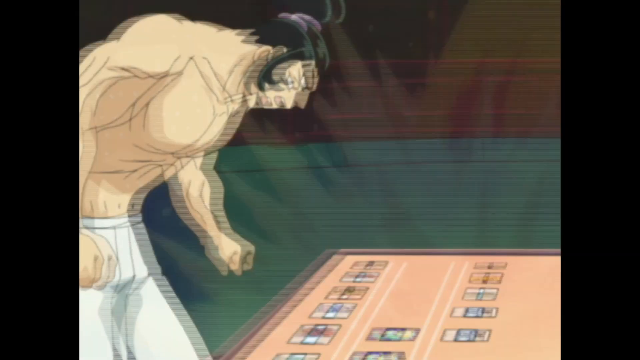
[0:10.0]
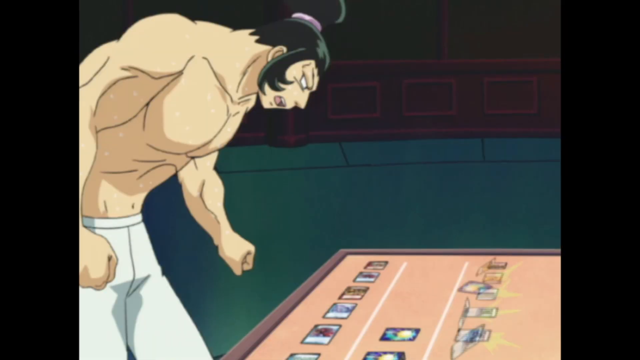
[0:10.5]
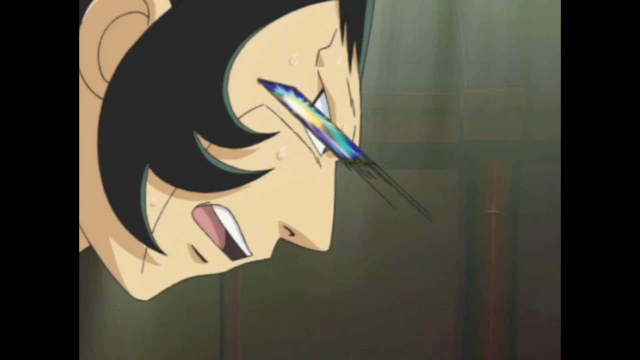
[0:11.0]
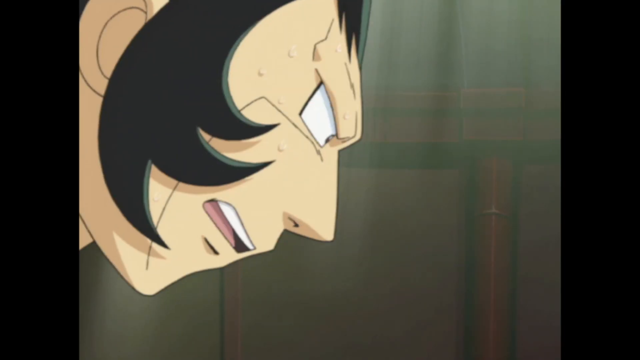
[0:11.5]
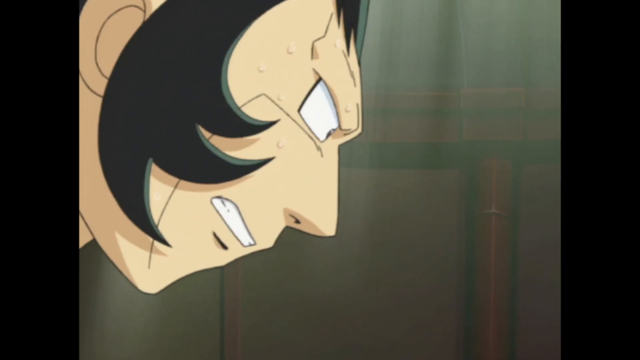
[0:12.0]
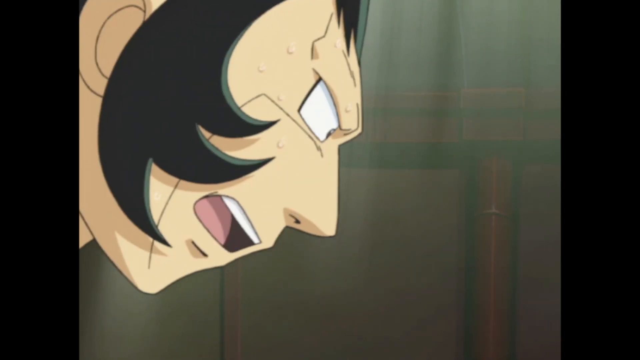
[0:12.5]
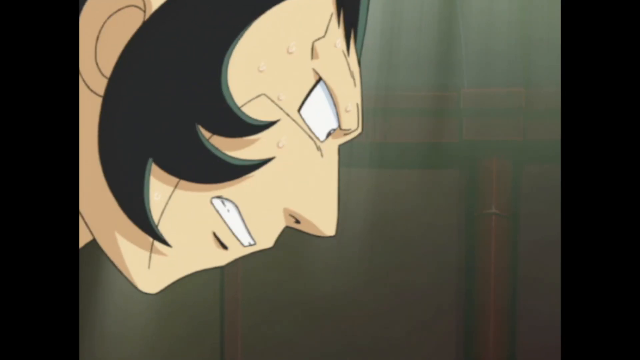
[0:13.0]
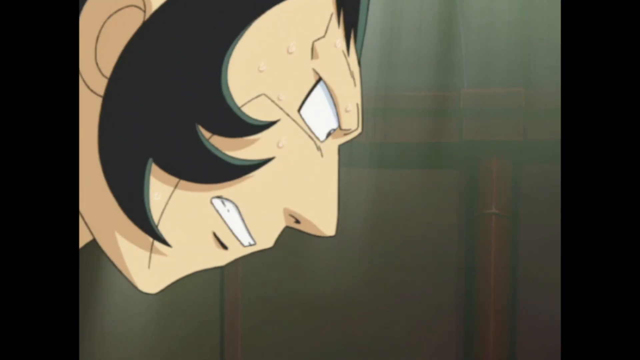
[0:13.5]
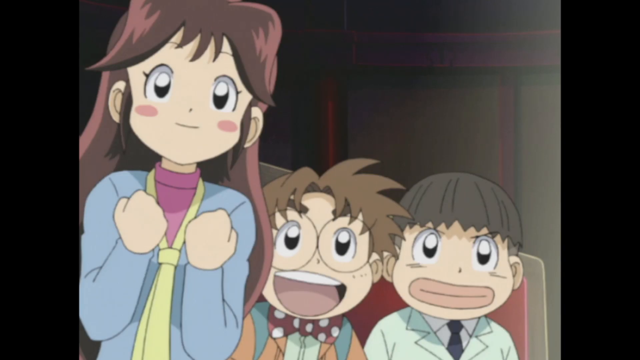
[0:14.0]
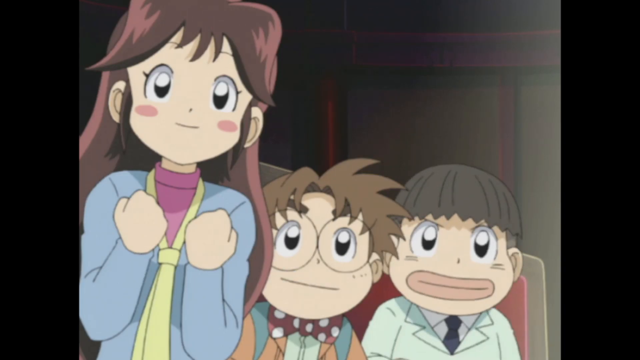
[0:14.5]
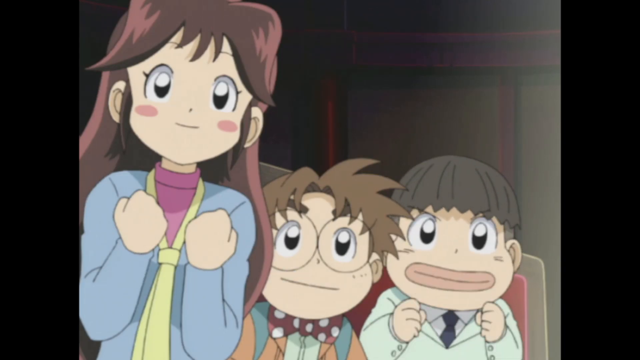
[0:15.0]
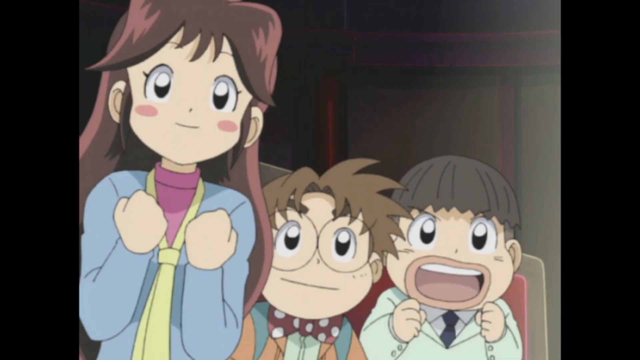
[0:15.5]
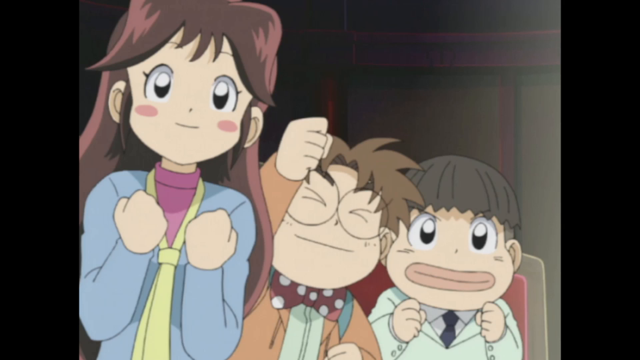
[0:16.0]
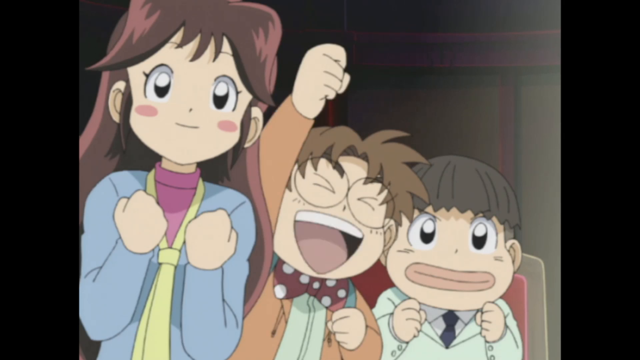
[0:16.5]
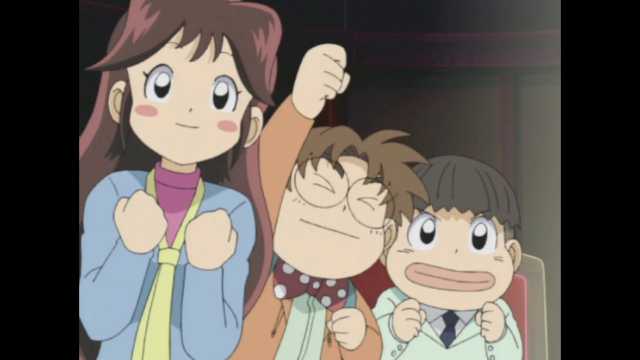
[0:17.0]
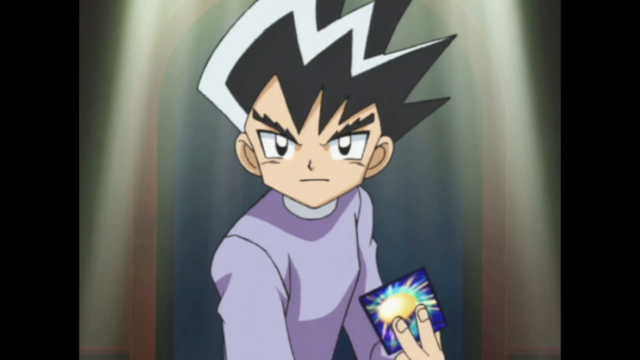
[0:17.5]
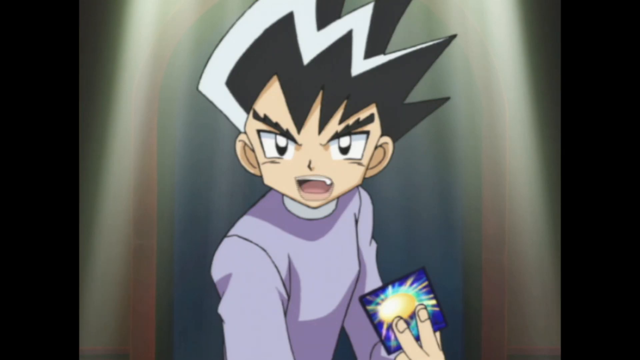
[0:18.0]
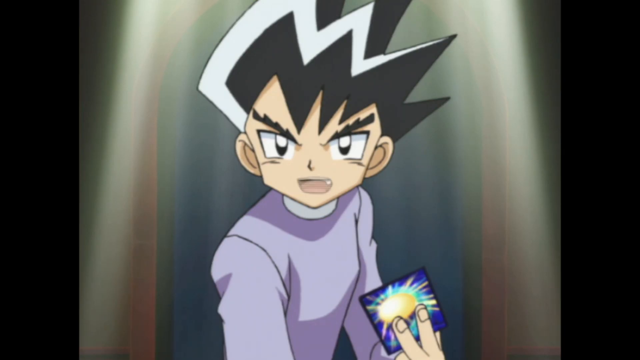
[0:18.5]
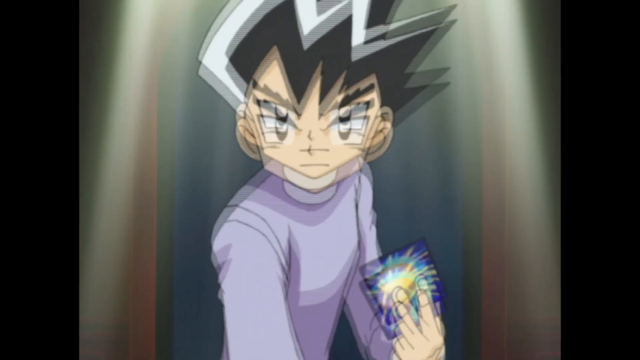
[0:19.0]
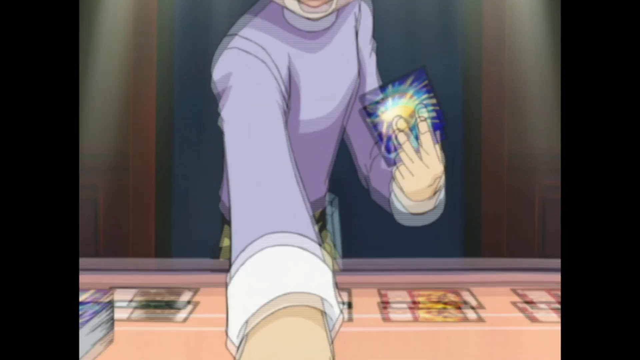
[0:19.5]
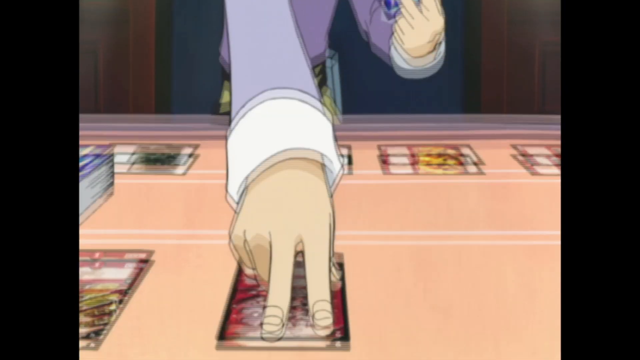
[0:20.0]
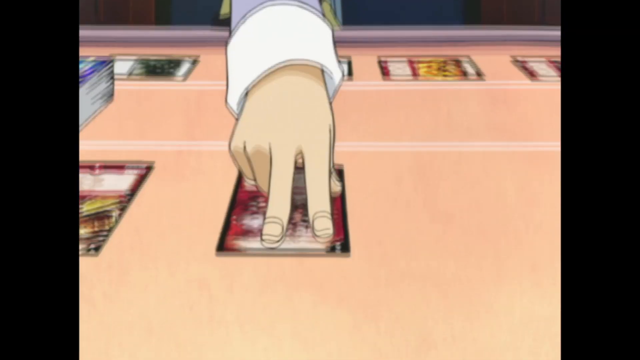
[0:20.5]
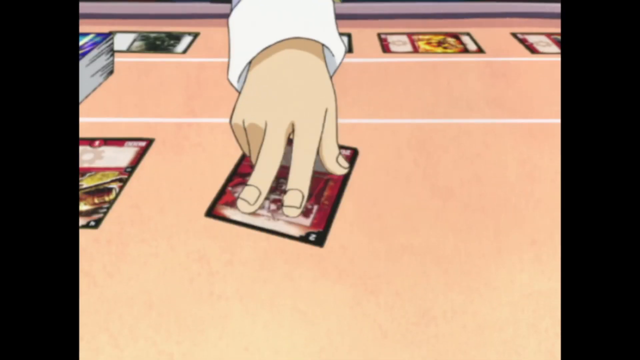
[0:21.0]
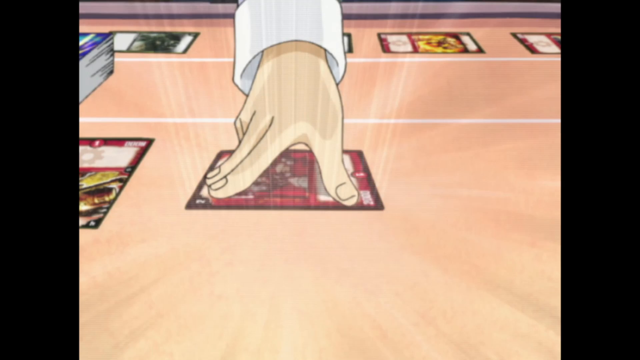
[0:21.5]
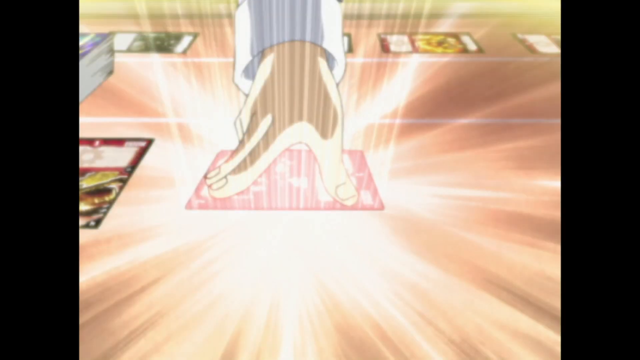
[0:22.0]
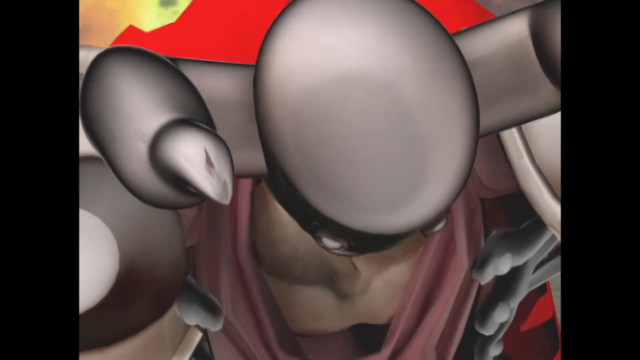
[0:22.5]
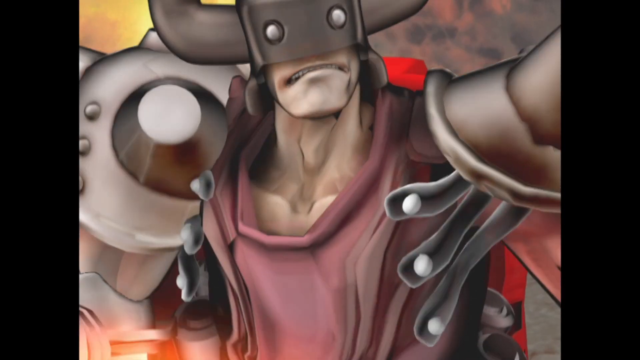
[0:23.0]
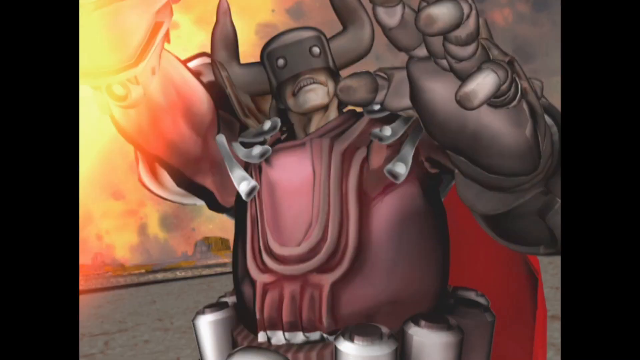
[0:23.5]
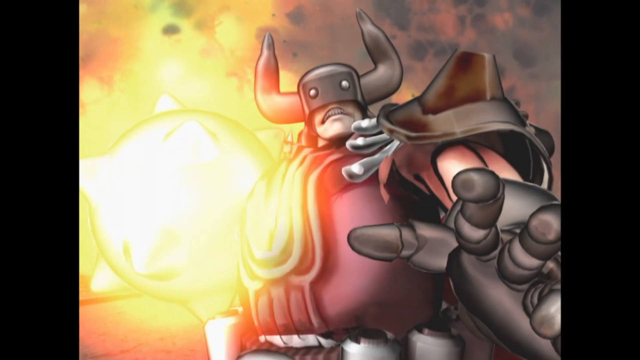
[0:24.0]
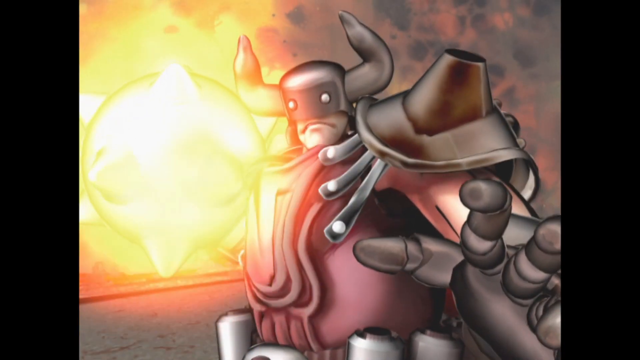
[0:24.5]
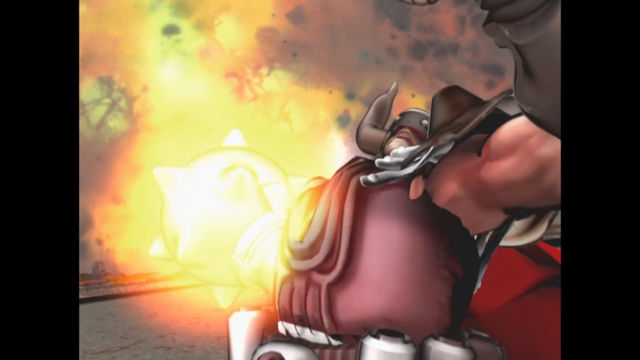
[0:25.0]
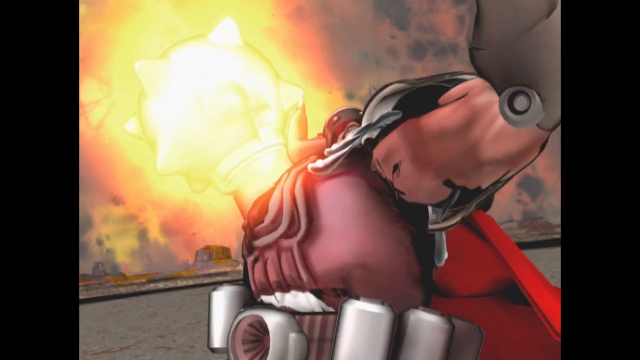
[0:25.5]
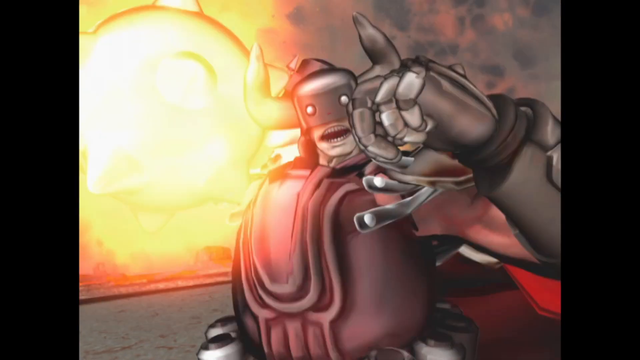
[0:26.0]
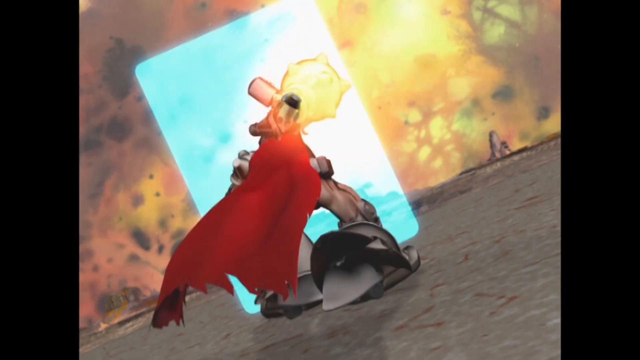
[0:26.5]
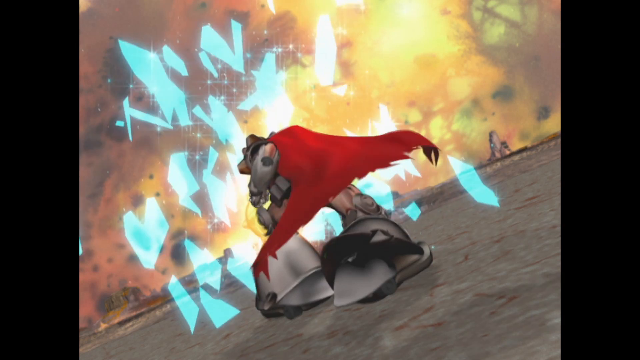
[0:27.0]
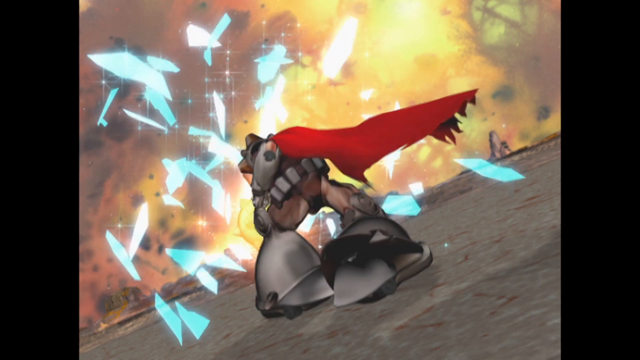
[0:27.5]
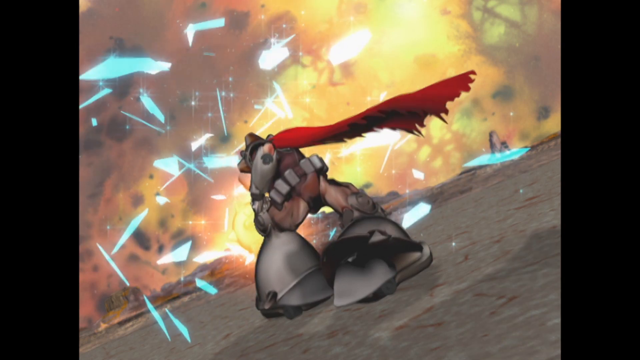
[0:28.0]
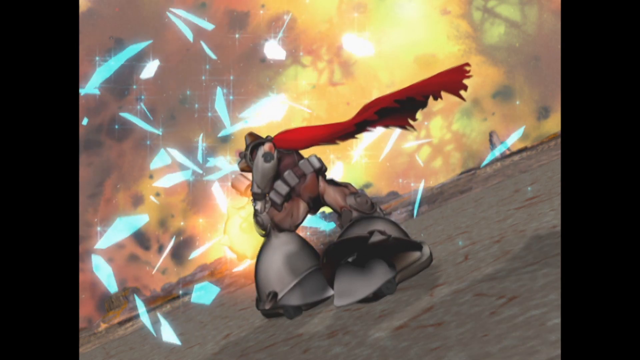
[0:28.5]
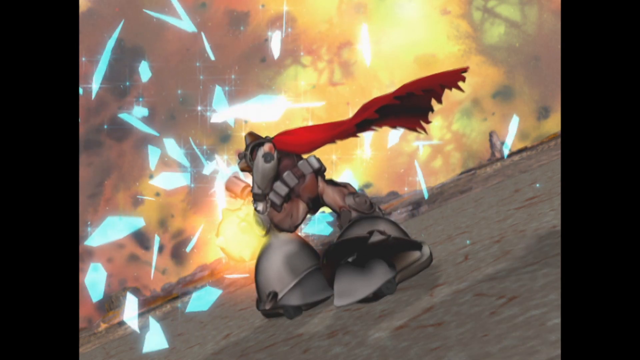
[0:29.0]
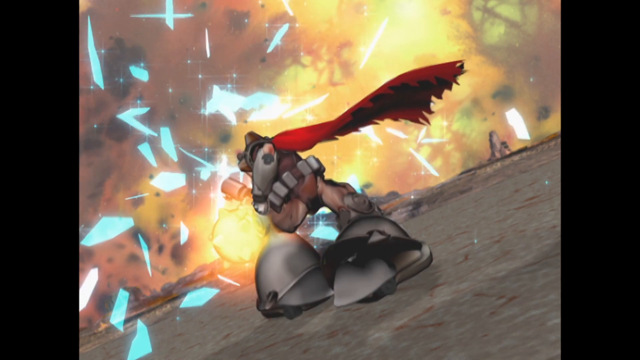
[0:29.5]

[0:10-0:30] The shirtless adult looks at the table with his fist gripped, as if he wants to fight. On the table are cards that look like Uno cards. The cards come flying at the adult's face, and he starts speaking. Three other characters are introduced: a girl and two boys, one of them little. They look excited to see, play or witness the game. The girl holds her hand gripped on her chest, as if she can't wait to see what happens. They are in a house that seems dark, with dim lighting. One of the kids shouts, and another starts talking. The middle one, who wears glasses, lifts his hand with his fist gripped, as if shouting. One of the young men playing the cards, who is dressed, takes a card, looks at his opponent, talks to him and points, then shifts the cards so they look like they are crossing, pointing to nine and three. Light comes from the cards, and a figure like Thor, a knight wearing a helmet shaped like a bull's head, appears. He takes fire in one hand and smashes a glass, which shatters into small pieces.